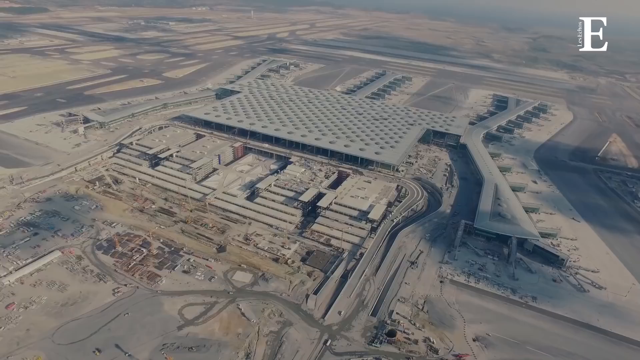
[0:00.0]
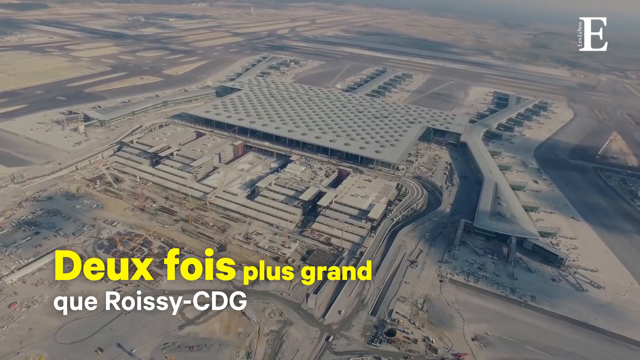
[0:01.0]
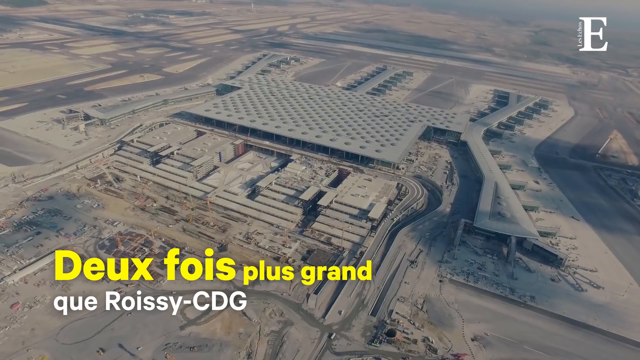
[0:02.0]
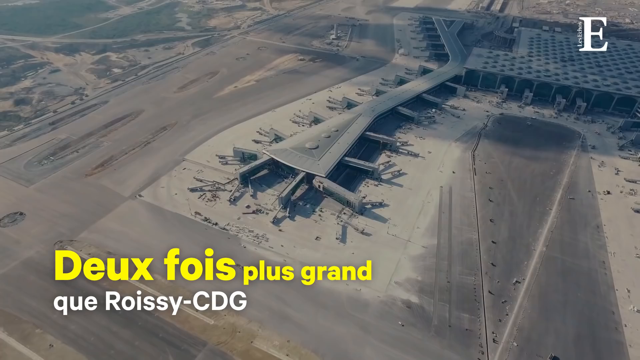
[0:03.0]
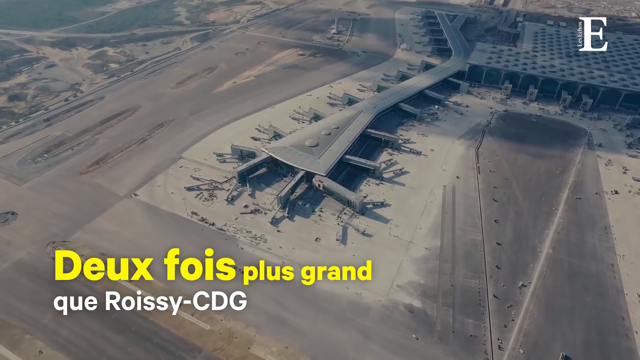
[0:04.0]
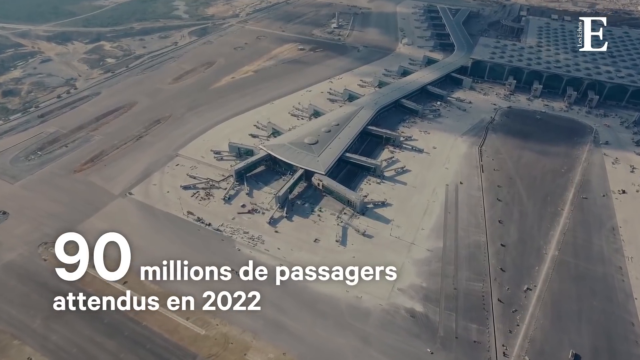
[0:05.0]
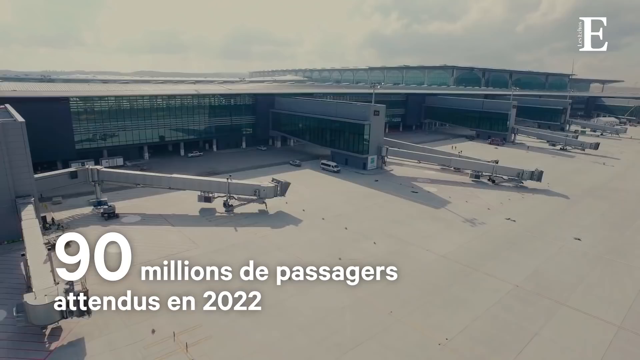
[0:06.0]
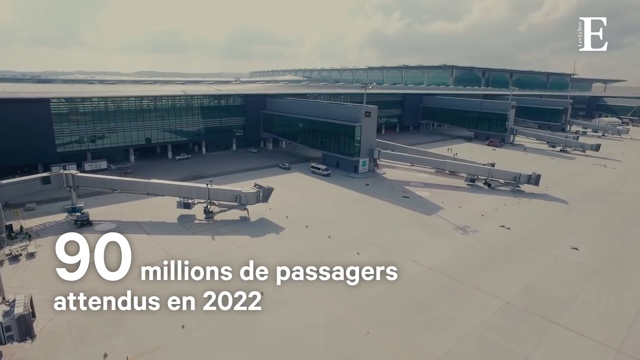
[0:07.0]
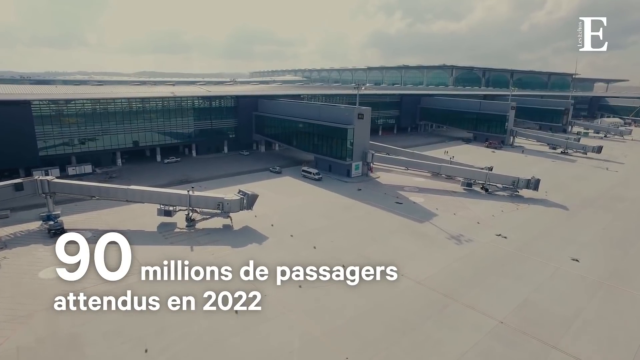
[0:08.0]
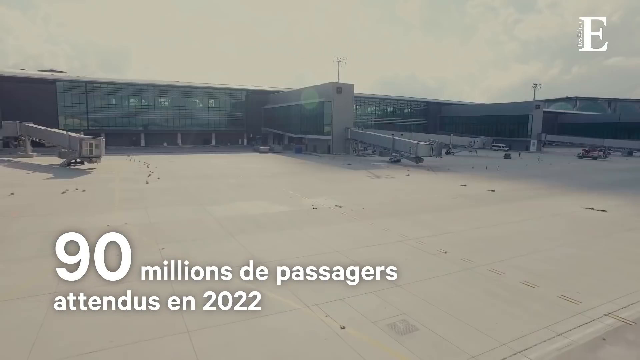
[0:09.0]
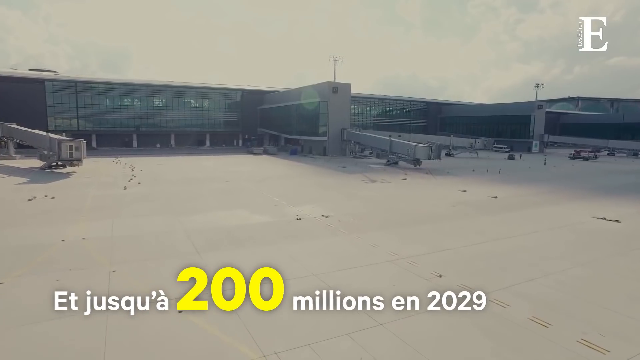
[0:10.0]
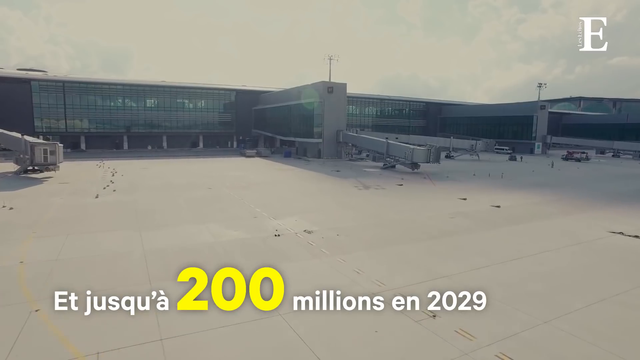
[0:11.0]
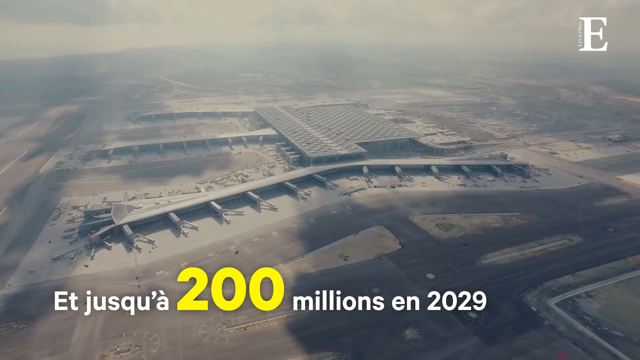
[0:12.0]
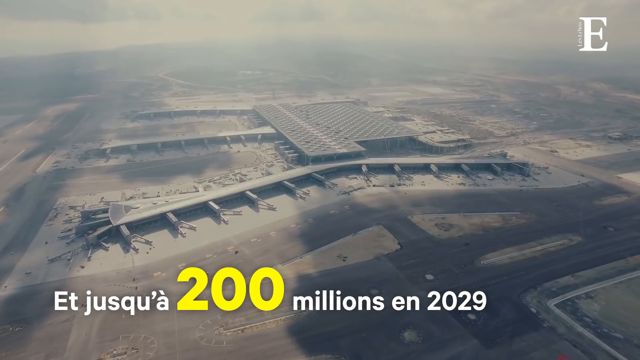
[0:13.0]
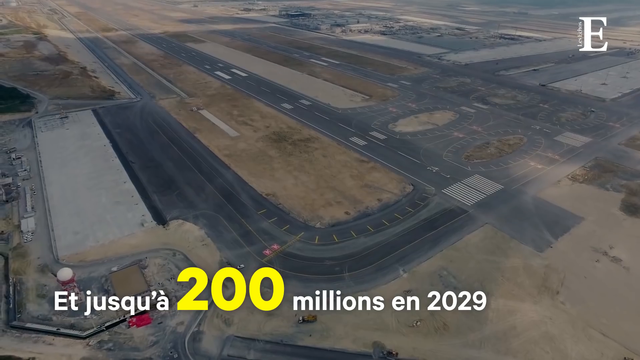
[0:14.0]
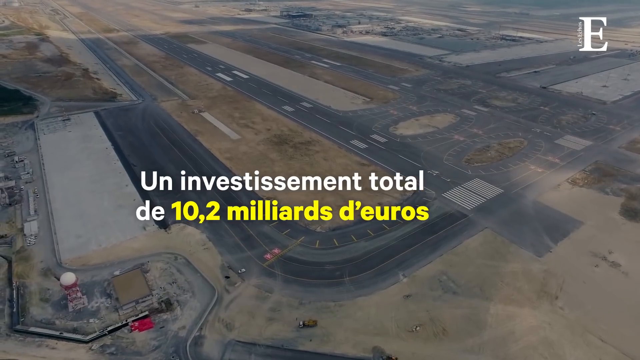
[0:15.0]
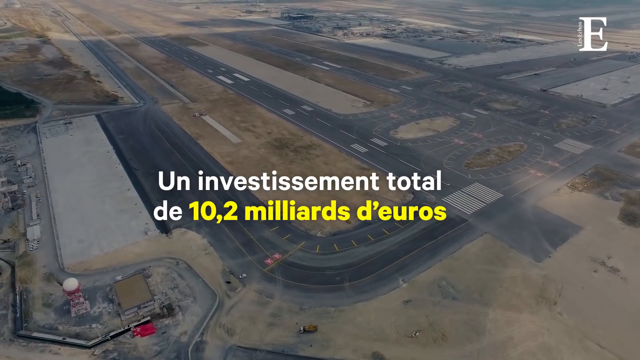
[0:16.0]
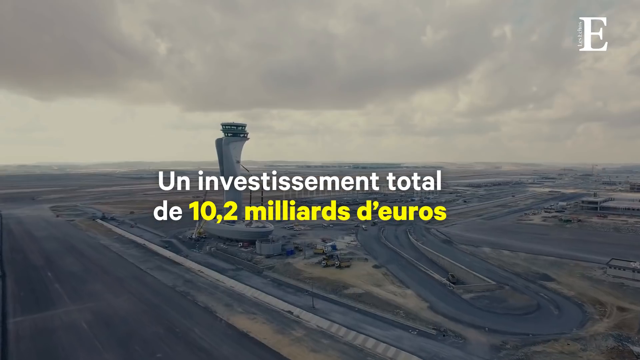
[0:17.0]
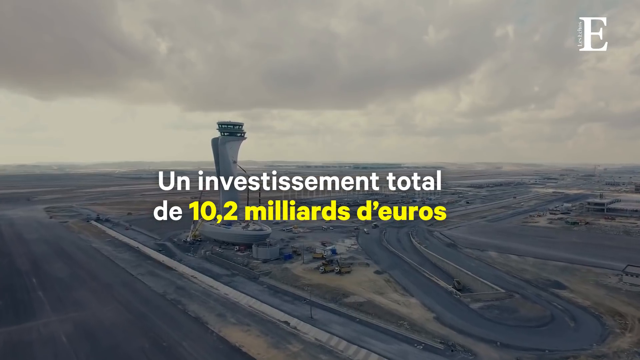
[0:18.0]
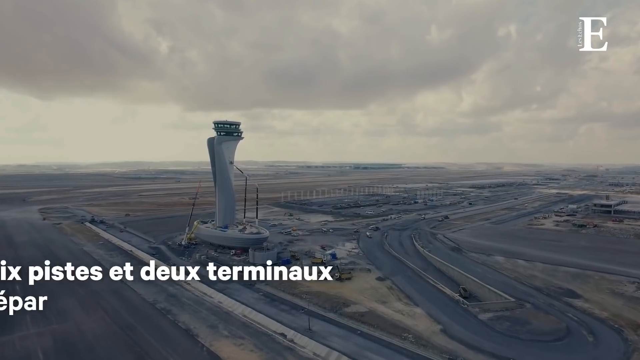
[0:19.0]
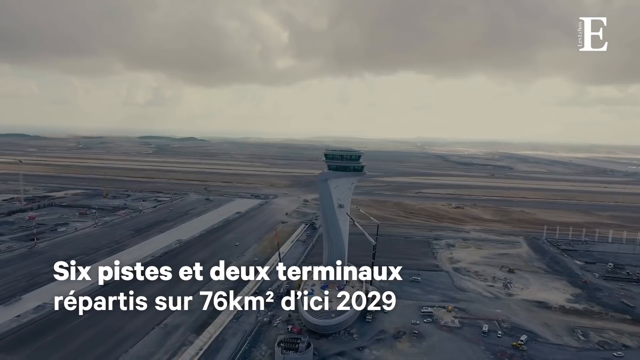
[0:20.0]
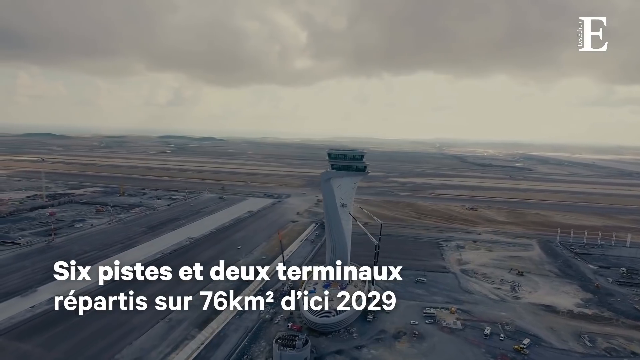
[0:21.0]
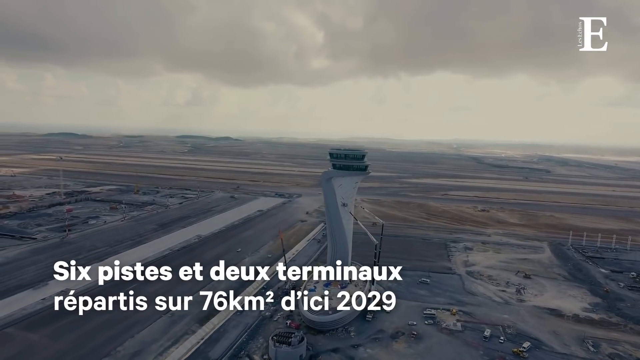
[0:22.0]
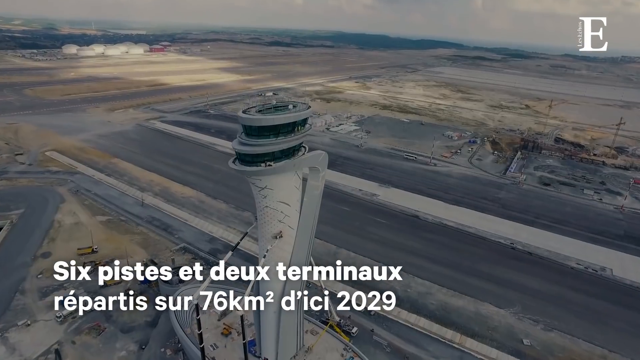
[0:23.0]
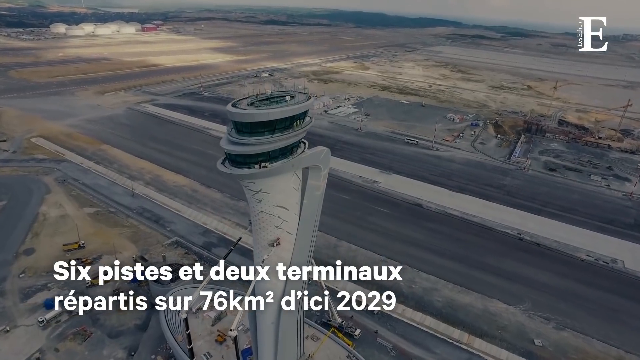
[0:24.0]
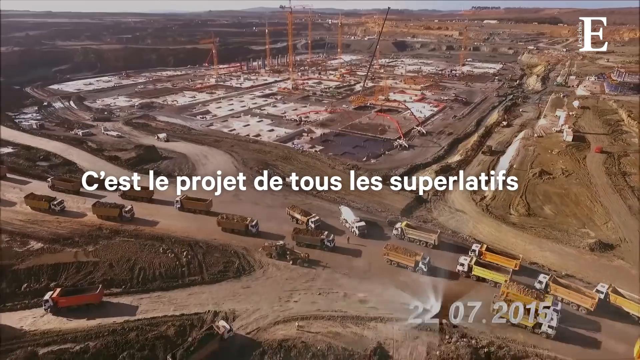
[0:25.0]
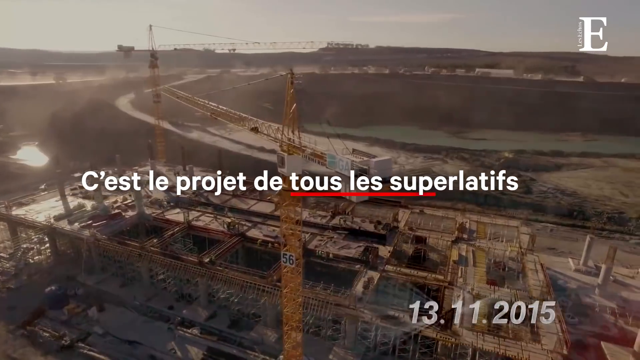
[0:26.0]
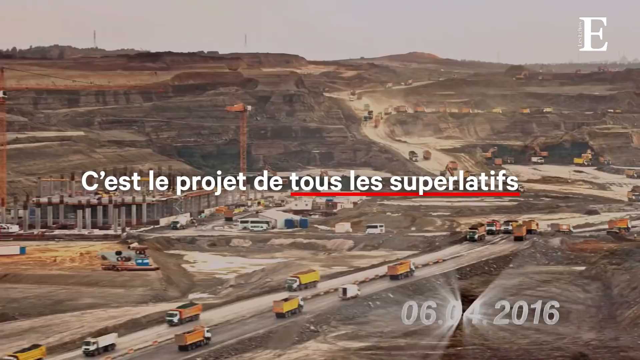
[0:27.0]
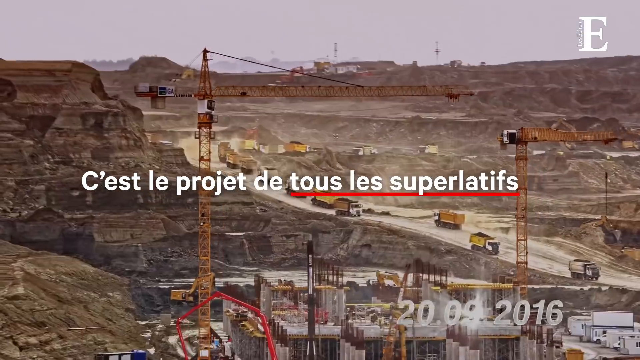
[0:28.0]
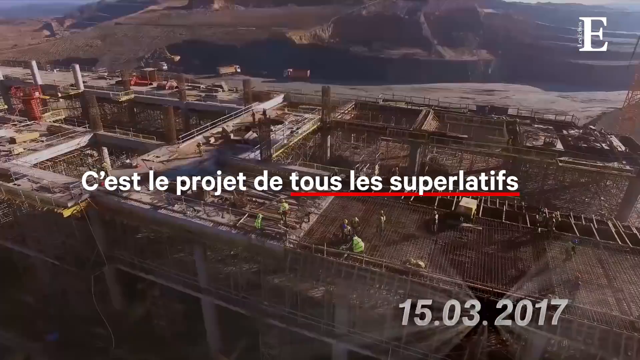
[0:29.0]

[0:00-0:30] What seems to be drone footage looks over an airport. On-screen text appears in another language and mentions "200 millions", apparently about investments in euros. The shot begins overlooking the whole airport, already built, then shows the hangars where the planes are docked to unload passengers, the runways where planes take off, and the flight tower. A fast sequence then flashes through footage of the different portions of the construction, going by very quickly.